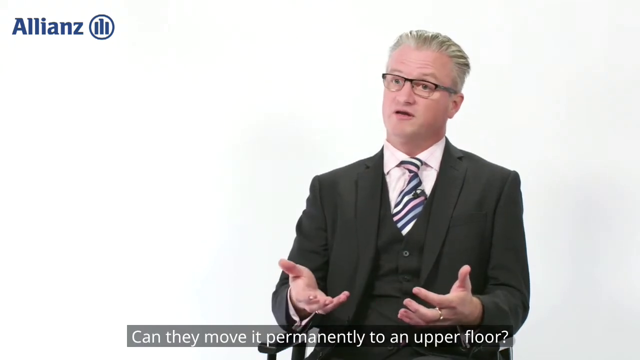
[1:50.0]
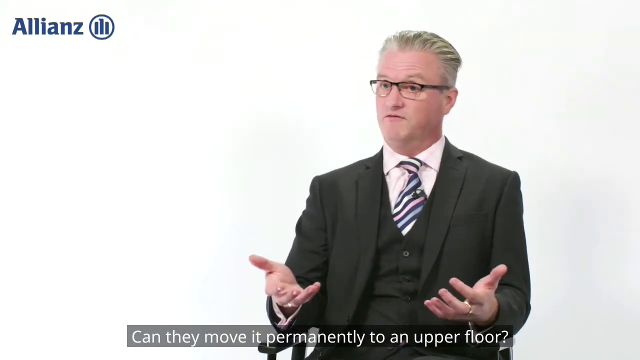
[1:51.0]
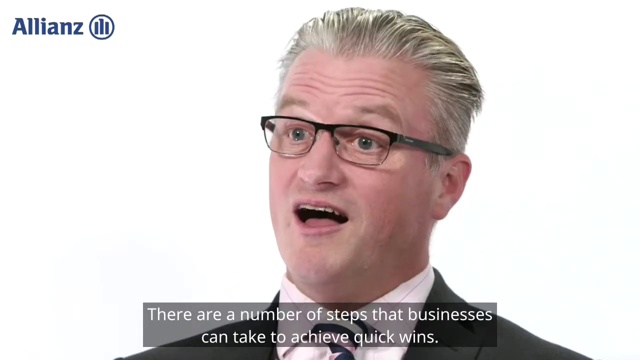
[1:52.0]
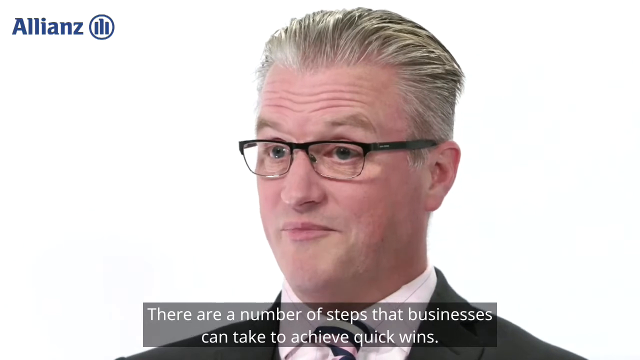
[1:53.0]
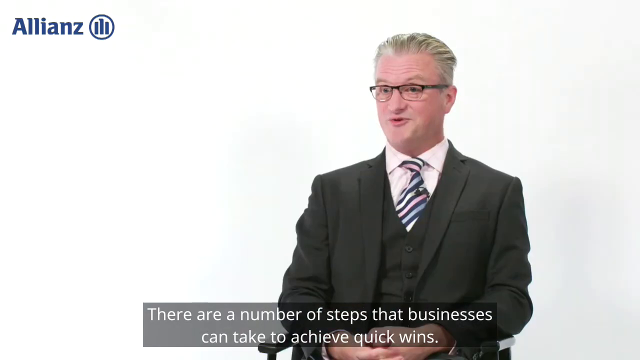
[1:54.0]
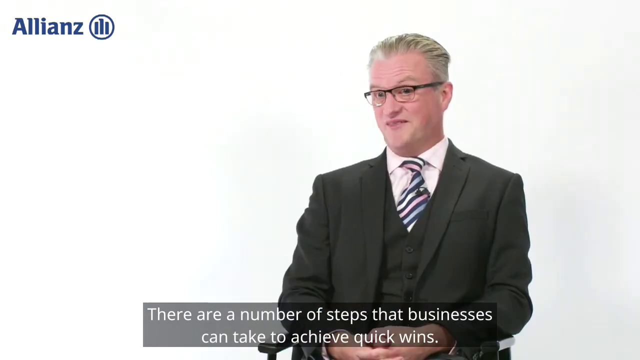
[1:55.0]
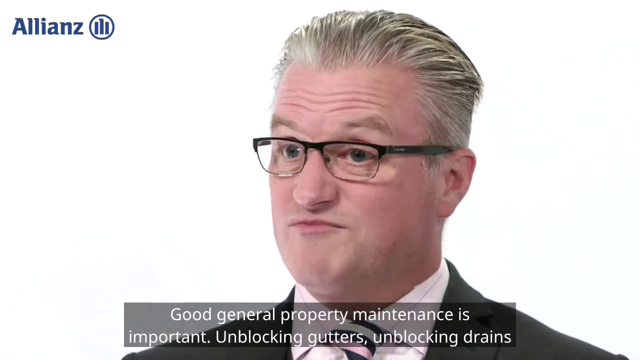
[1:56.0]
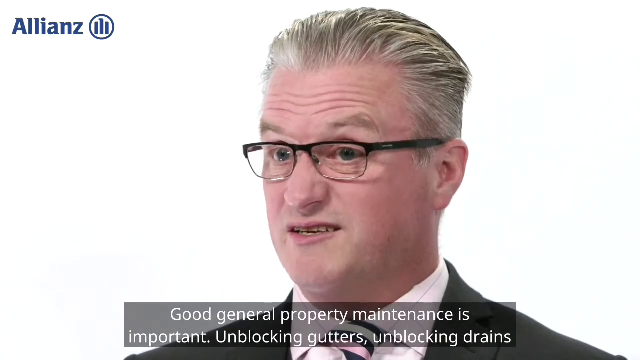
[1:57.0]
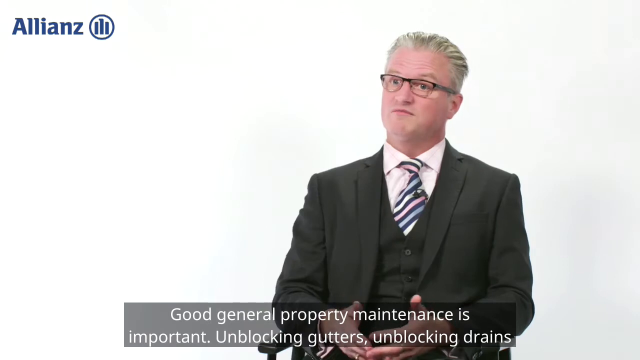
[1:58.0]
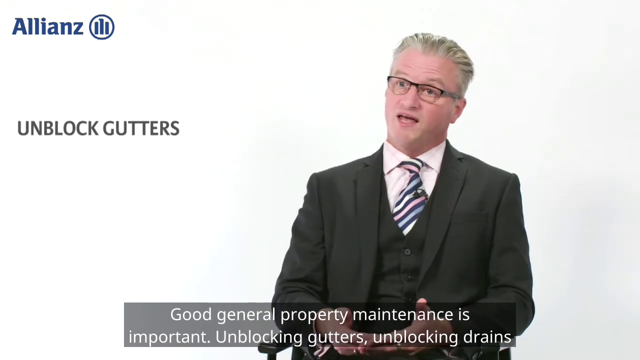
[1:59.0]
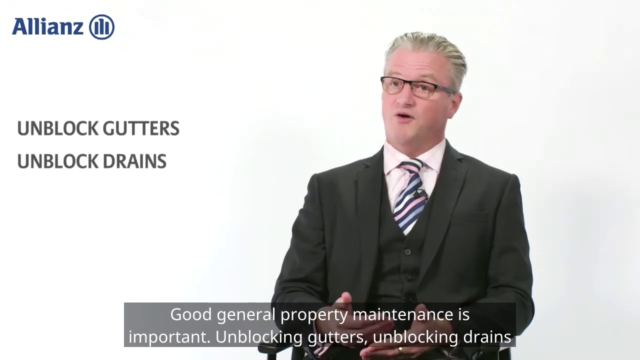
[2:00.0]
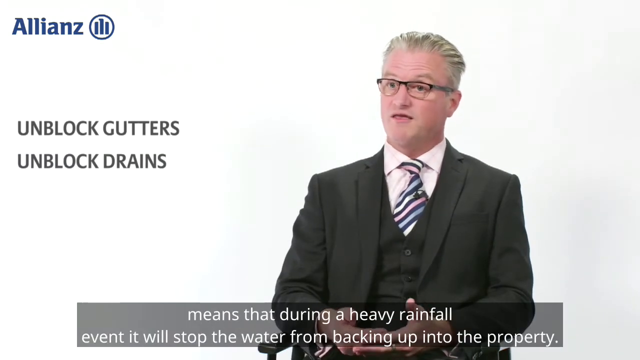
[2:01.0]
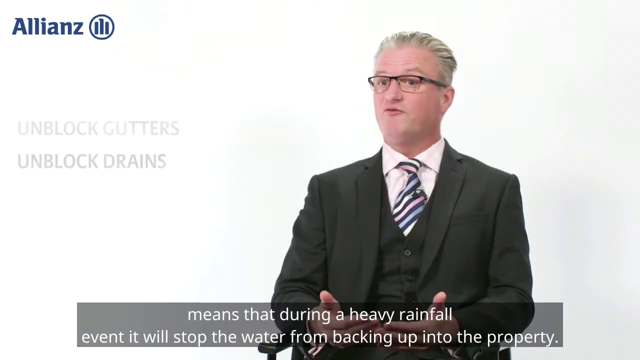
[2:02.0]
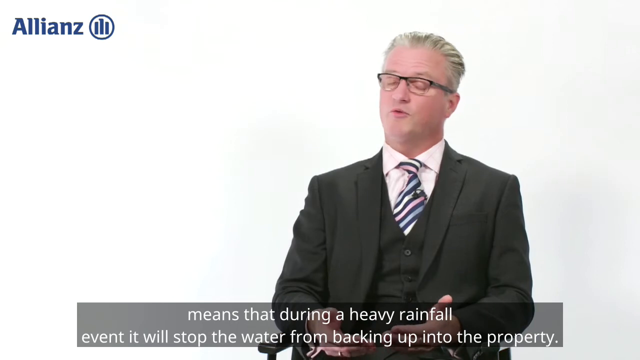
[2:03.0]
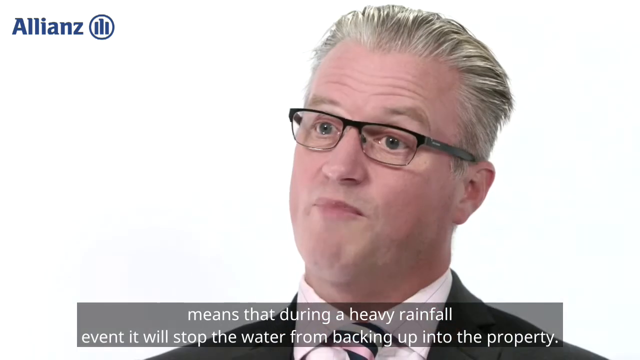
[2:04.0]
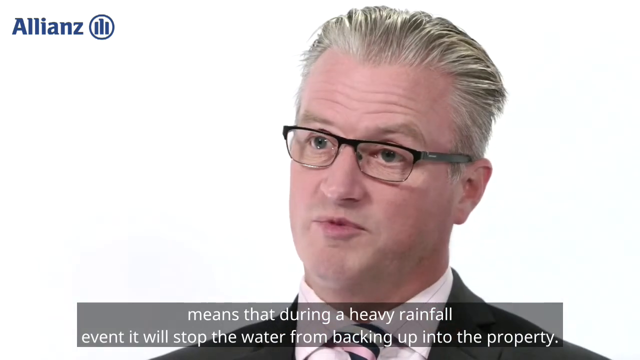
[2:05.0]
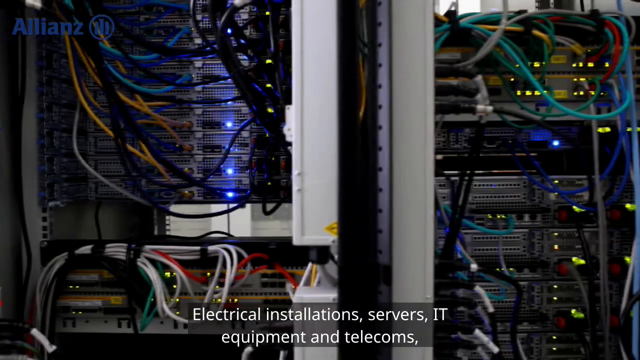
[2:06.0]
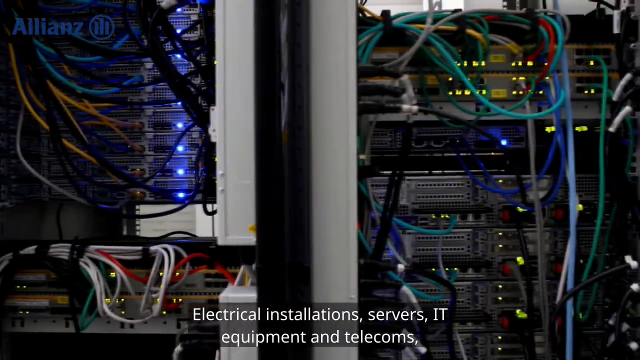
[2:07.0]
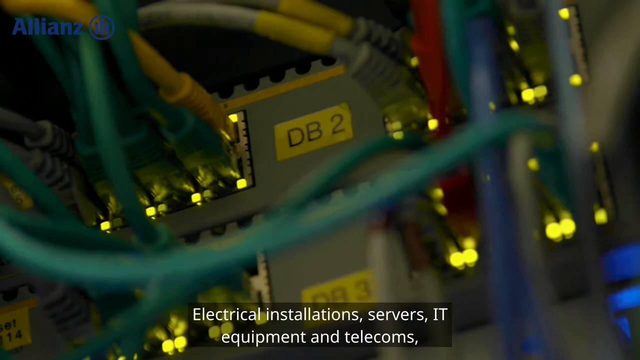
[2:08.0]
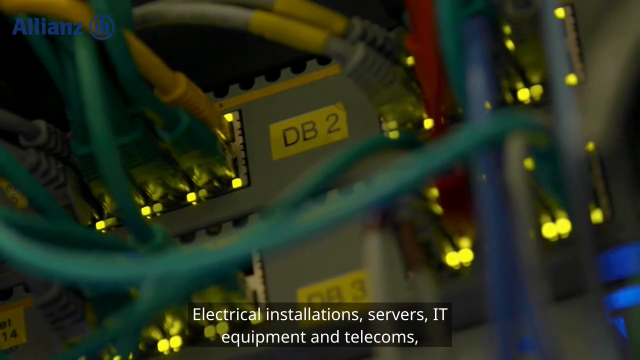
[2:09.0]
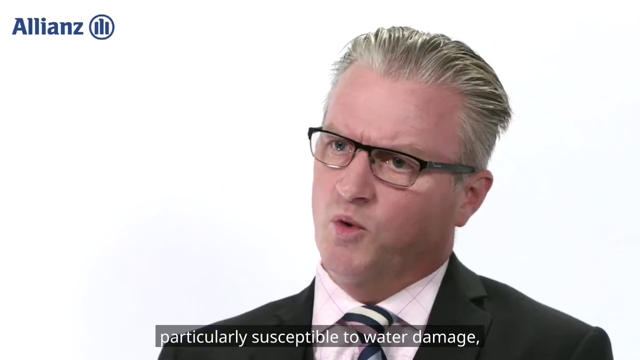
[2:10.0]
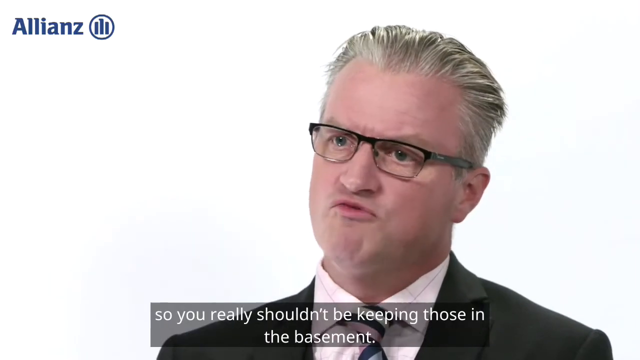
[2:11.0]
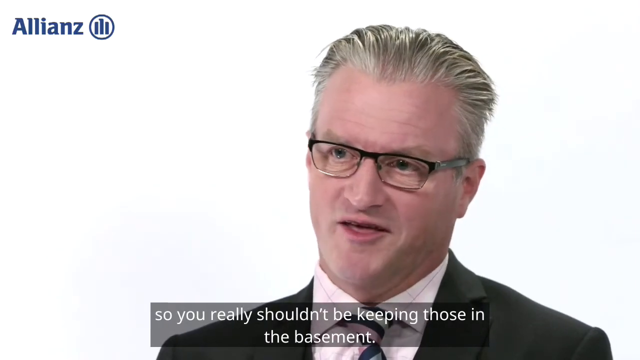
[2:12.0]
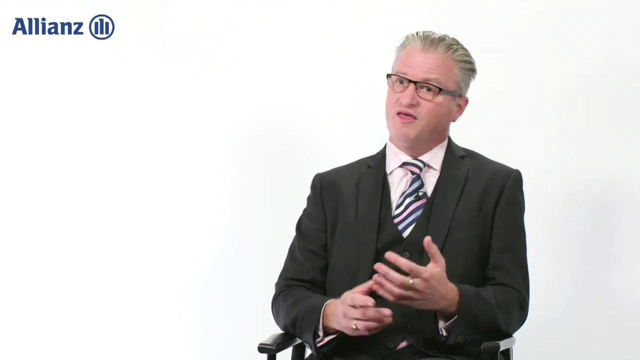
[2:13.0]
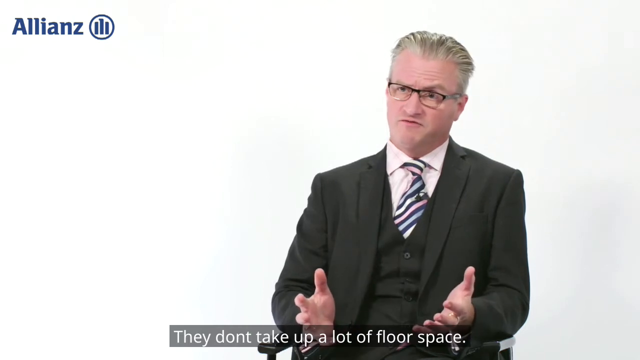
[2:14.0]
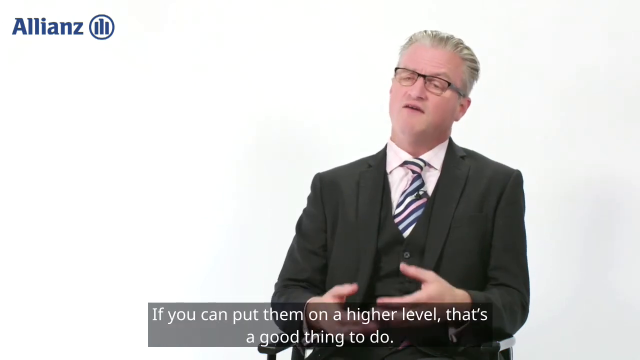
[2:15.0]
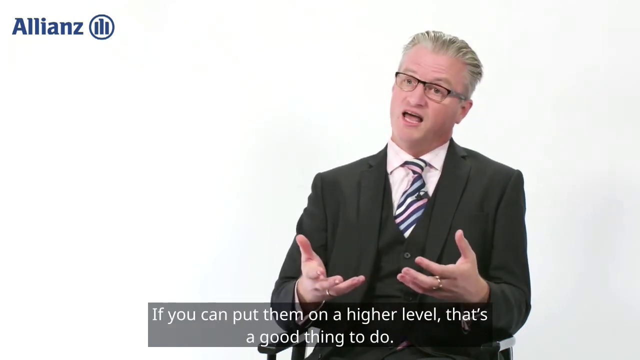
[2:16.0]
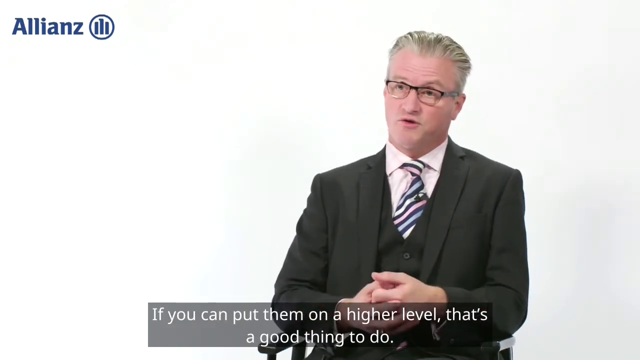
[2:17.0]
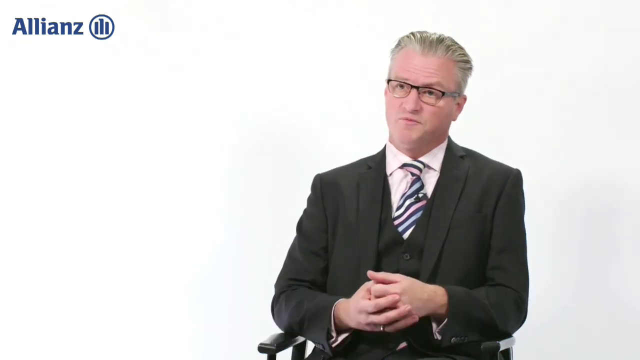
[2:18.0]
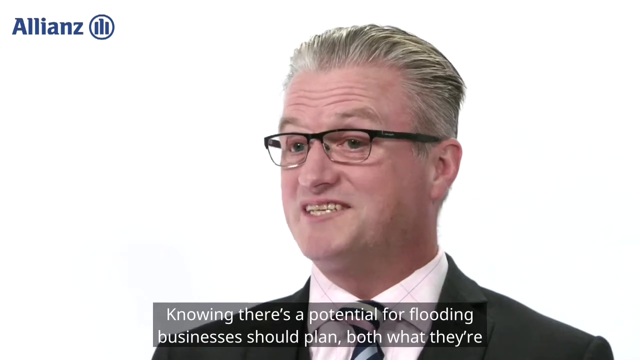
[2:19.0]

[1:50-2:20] The man is still there talking, with both hands open. Text reads "there are a number of steps that businesses can take to achieve quick wins," "Good general property maintenance is important," "Unblocking gutters, unblocking drains means that during a heavy rainfall event, it will stop the water from backing up in the property," and "They don't take up a lot of floor space. If you can put them on a higher level that's a good thing to do."